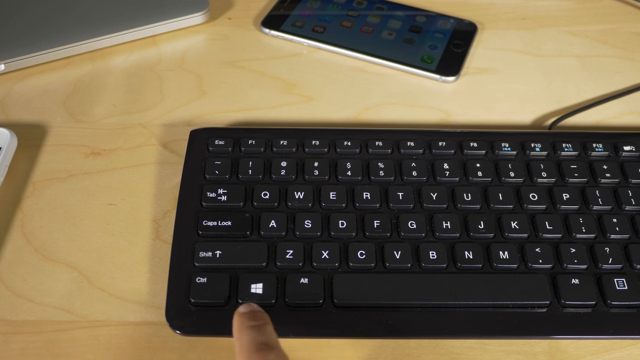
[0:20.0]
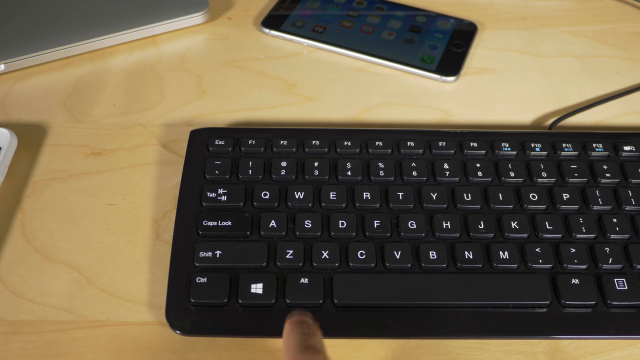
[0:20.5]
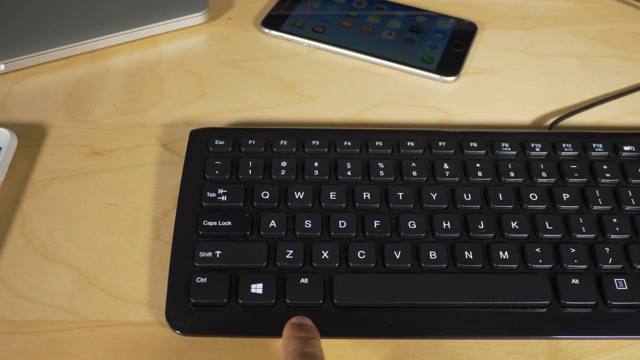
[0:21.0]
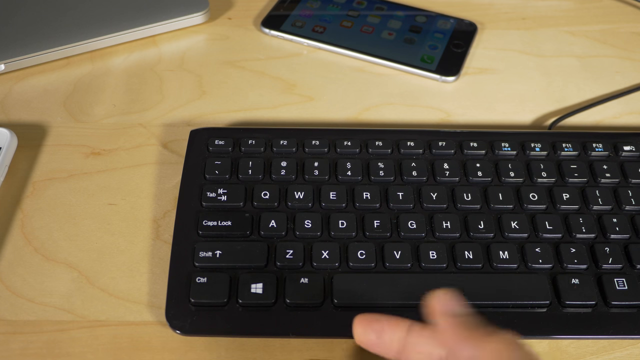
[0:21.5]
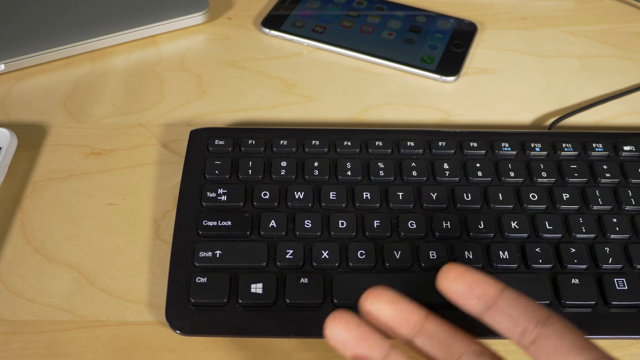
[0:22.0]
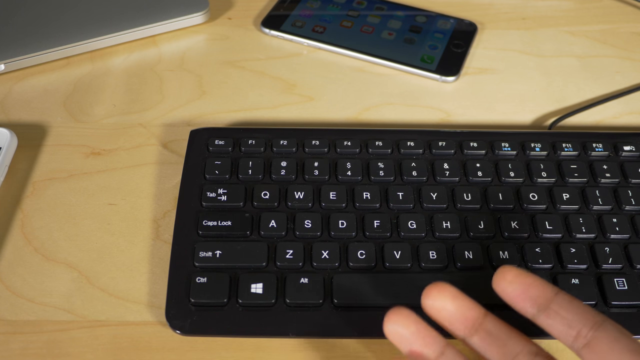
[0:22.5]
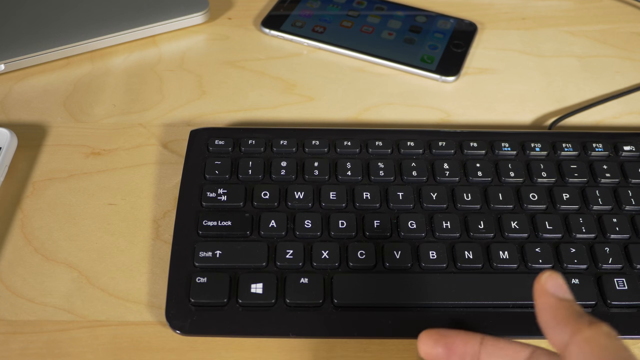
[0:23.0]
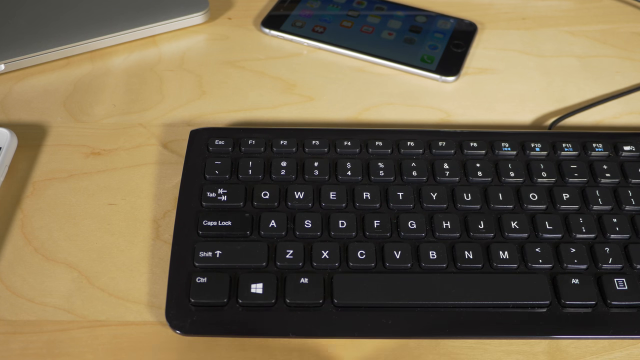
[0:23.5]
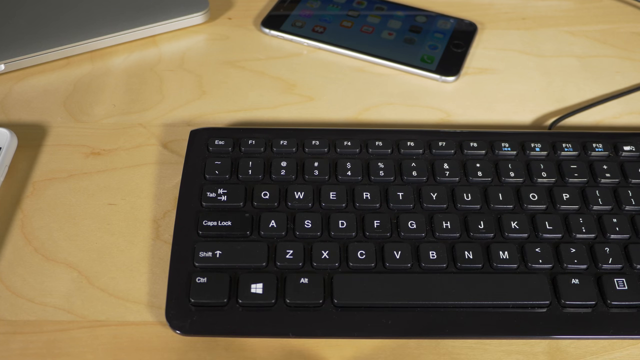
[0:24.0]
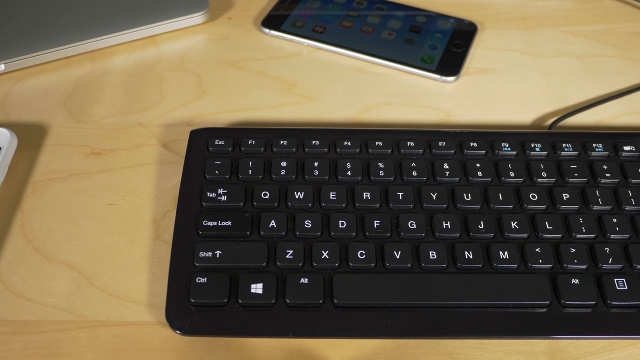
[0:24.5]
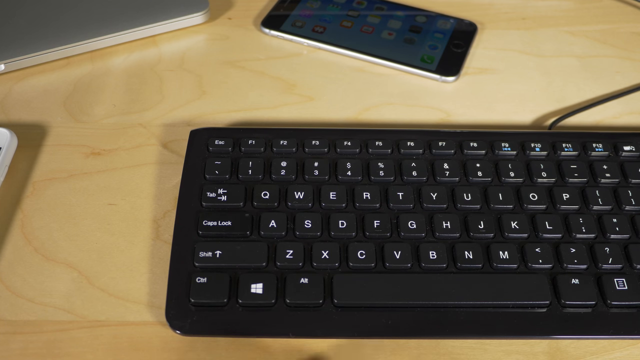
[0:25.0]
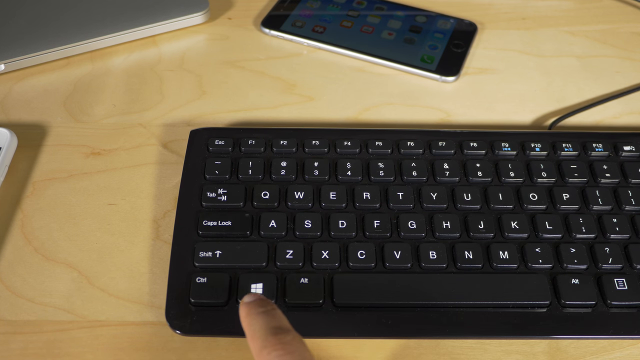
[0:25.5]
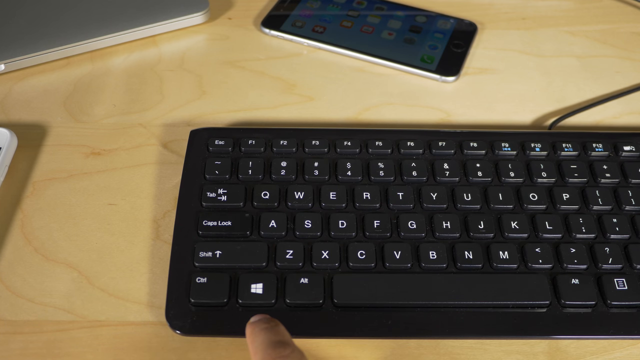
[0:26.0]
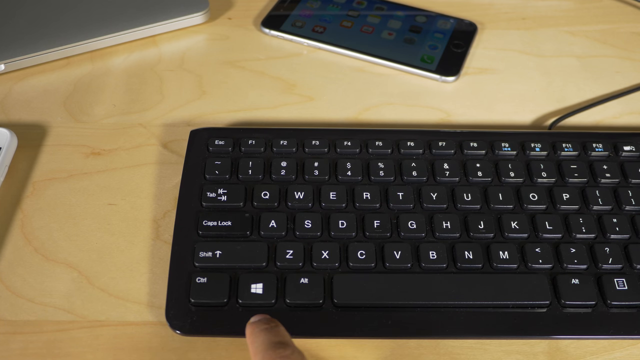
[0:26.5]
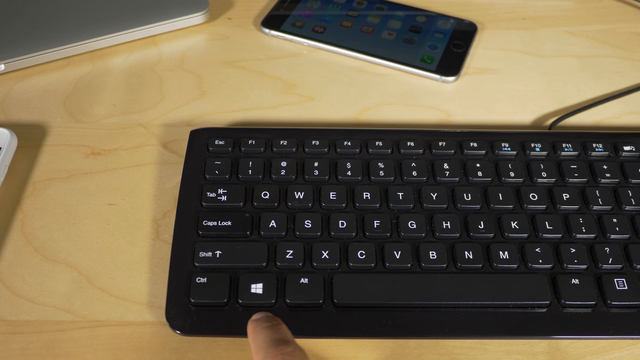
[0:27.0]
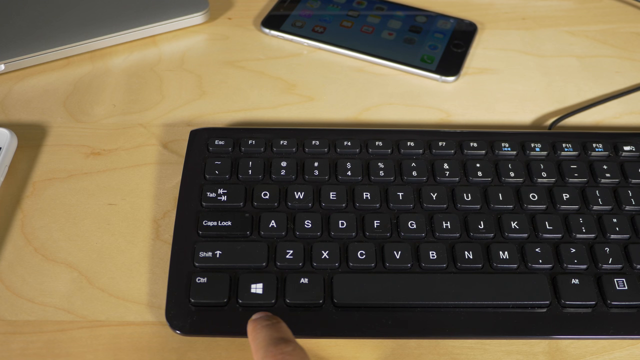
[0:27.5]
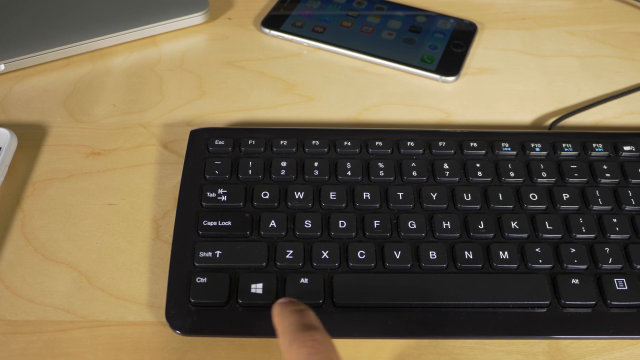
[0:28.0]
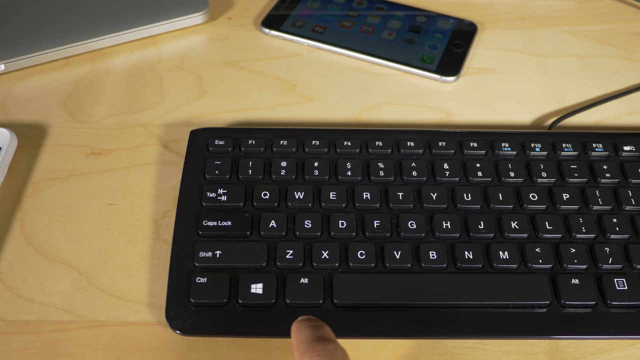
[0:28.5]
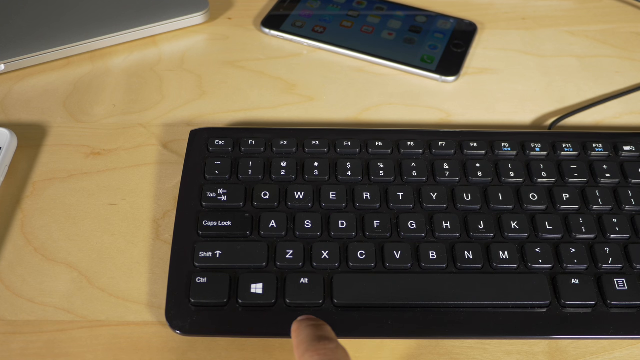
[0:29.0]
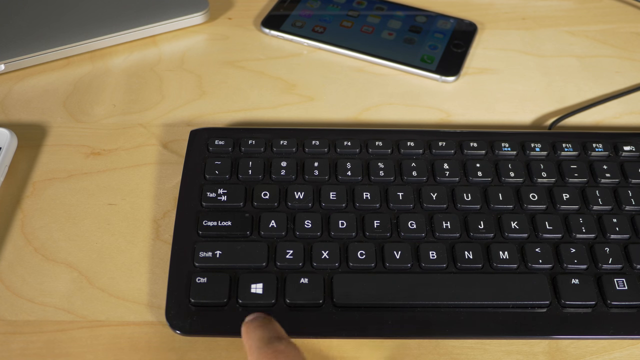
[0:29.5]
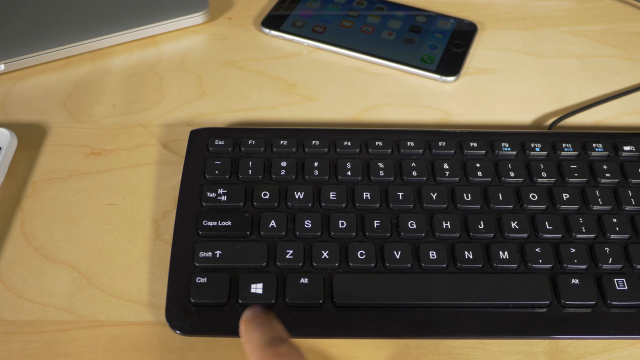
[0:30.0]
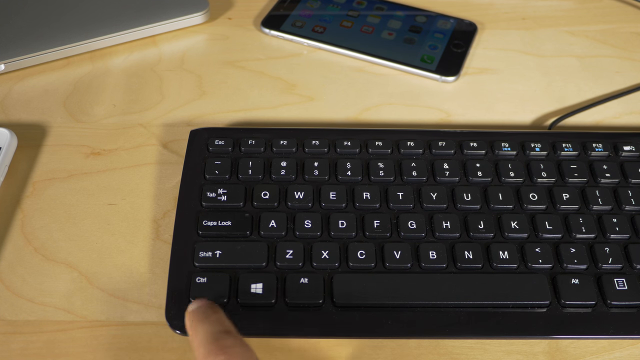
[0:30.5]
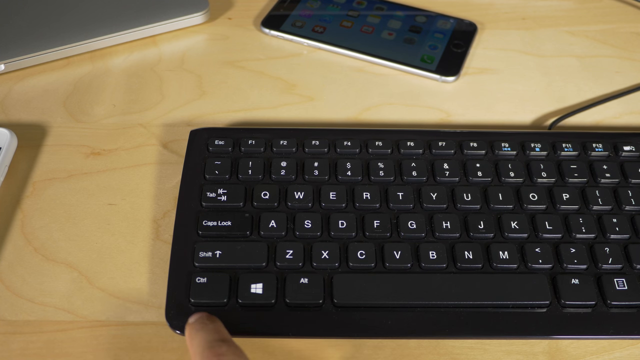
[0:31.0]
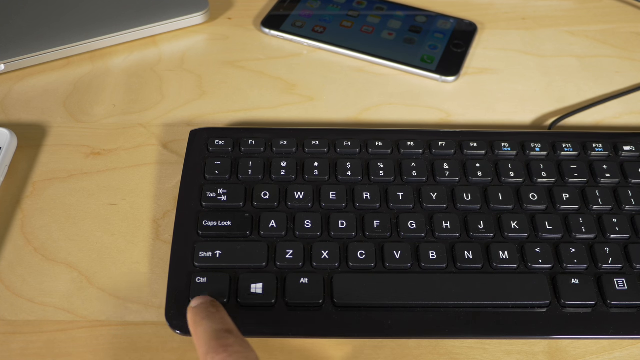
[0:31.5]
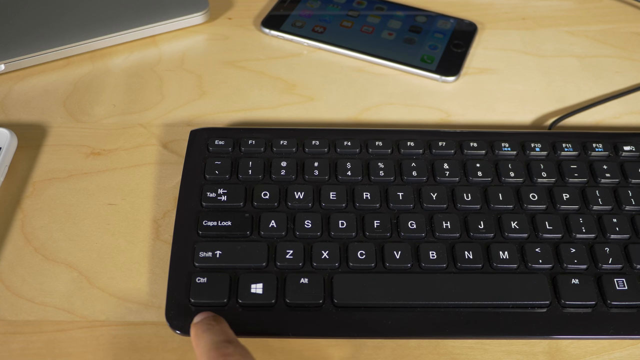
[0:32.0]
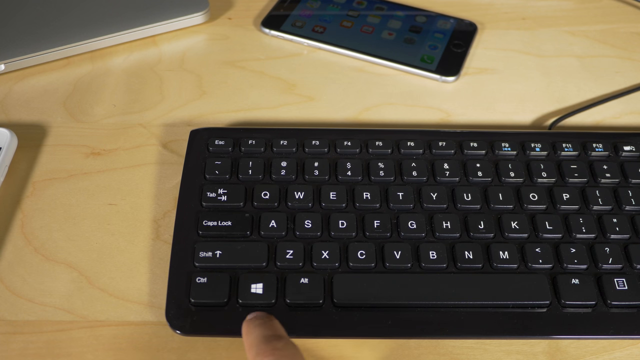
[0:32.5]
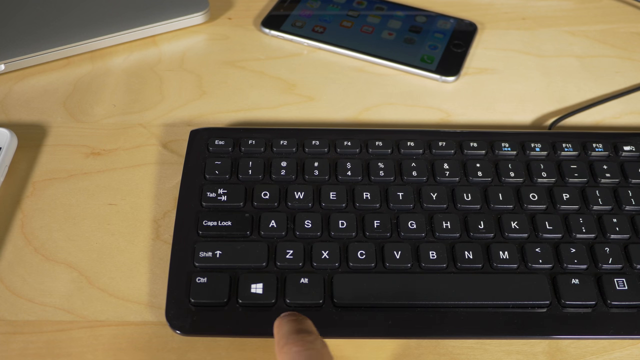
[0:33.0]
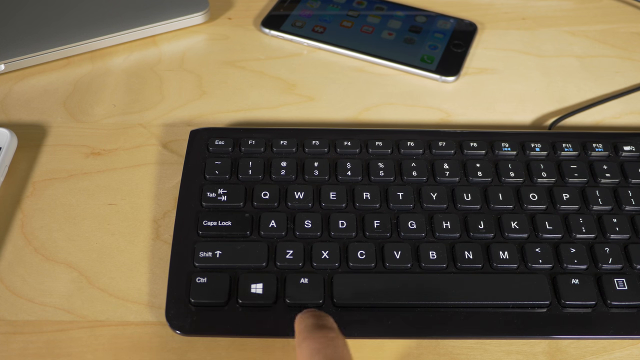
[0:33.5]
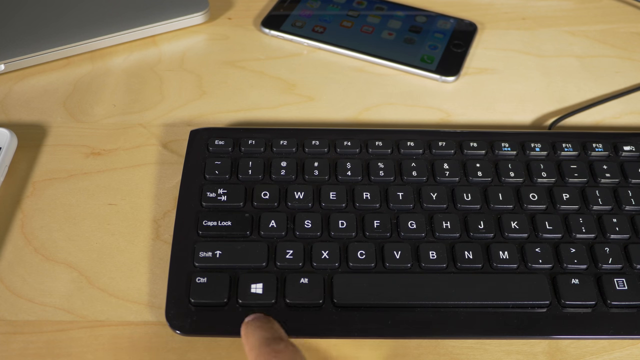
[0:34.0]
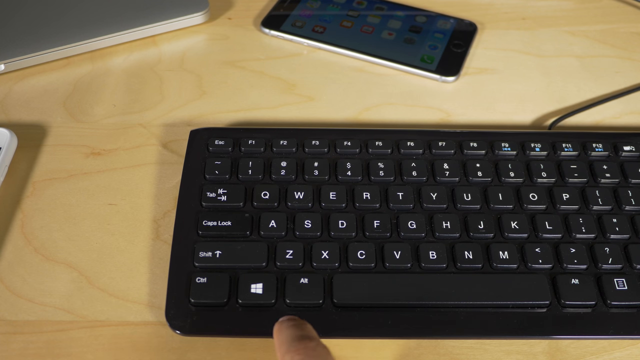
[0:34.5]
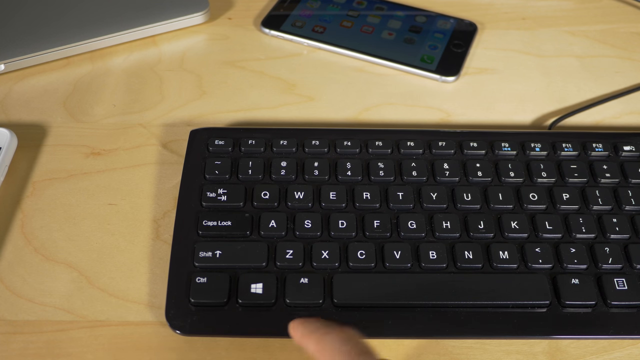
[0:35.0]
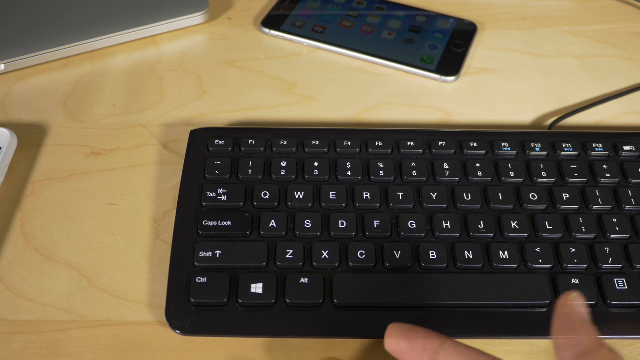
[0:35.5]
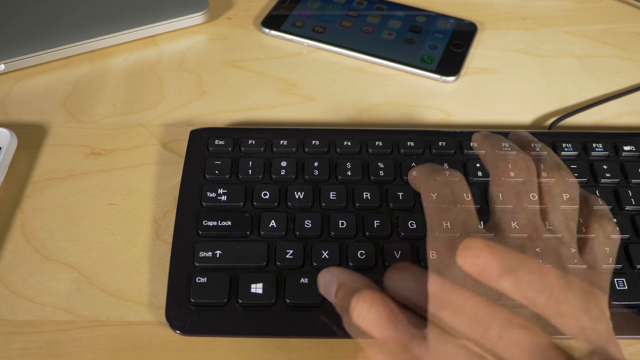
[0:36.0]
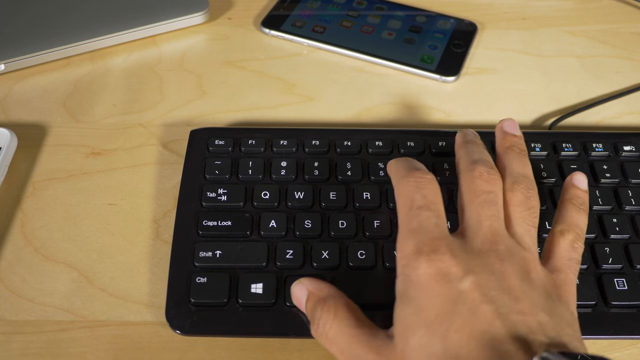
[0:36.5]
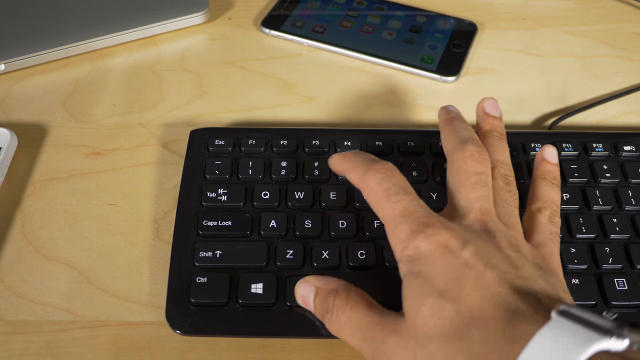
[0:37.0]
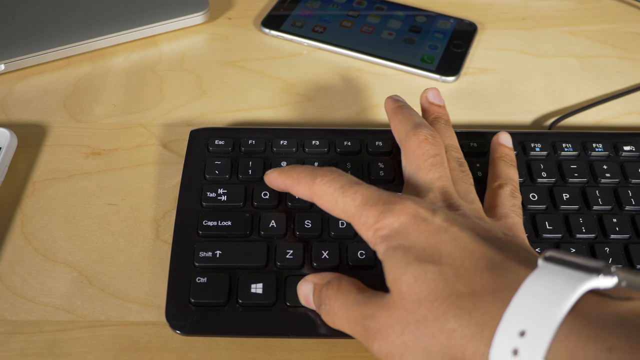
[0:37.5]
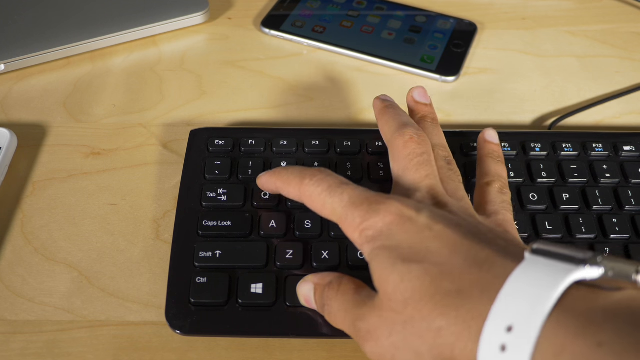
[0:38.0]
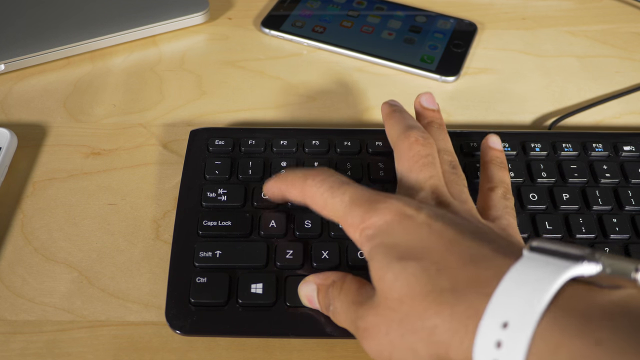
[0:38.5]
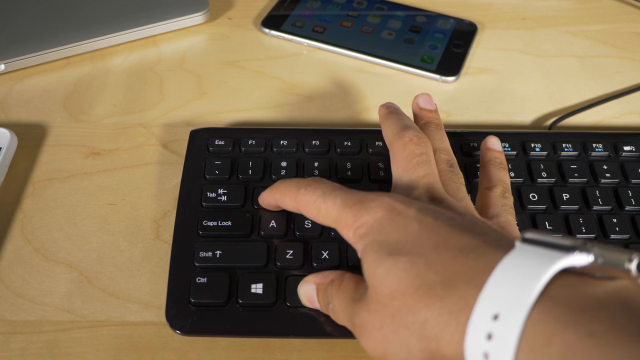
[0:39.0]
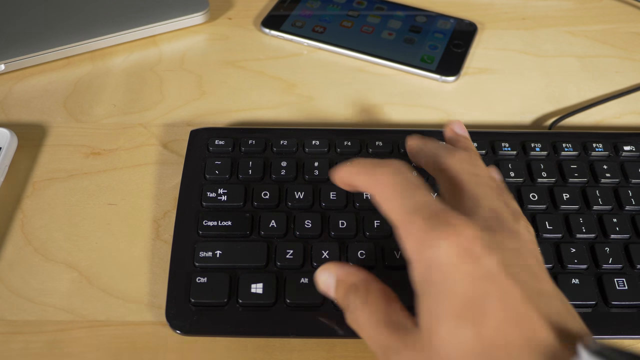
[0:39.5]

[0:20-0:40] A smartphone is at the top of the screen and a black keyboard at the bottom, on a table of a light wood color. The person points at the Windows icon button at the bottom of the keyboard, then points to the ALT button, then raises their hand so the palm faces the camera and the tips of their fingers are visible. They point at the Windows icon key again, kind of tap it a couple of times, tap the ALT key, and go back and forth tapping below the Windows key and the ALT key, repeating the motion. They then tap several times below the Control button before returning to tapping back and forth below the Windows and ALT keys. They kind of pull their hand out, and there appears to be a time lapse; then their full right hand goes to the keyboard, pressing the ALT and Q buttons at the same time, and they keep repeating that motion.